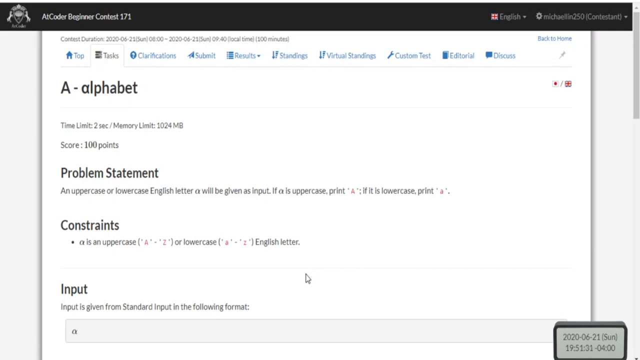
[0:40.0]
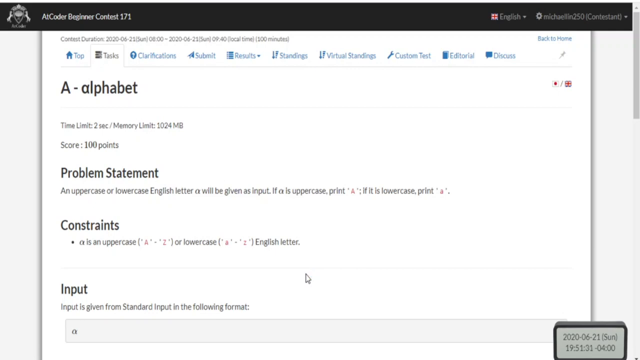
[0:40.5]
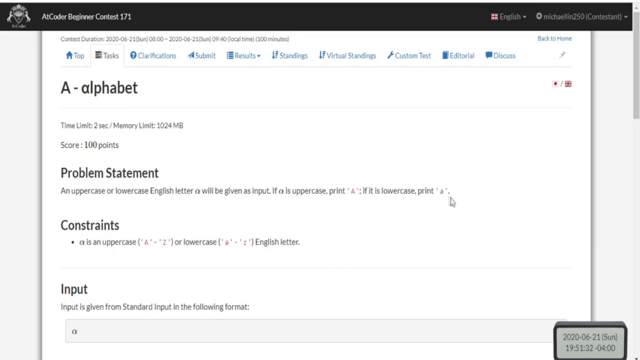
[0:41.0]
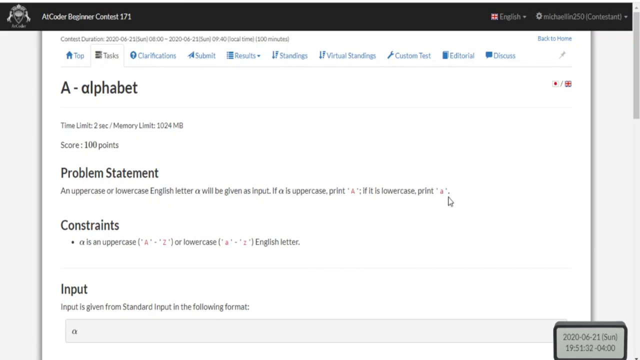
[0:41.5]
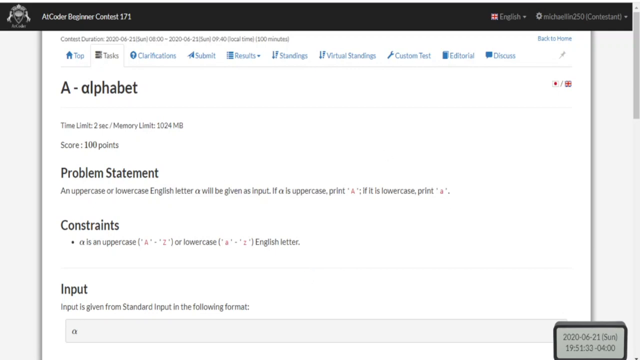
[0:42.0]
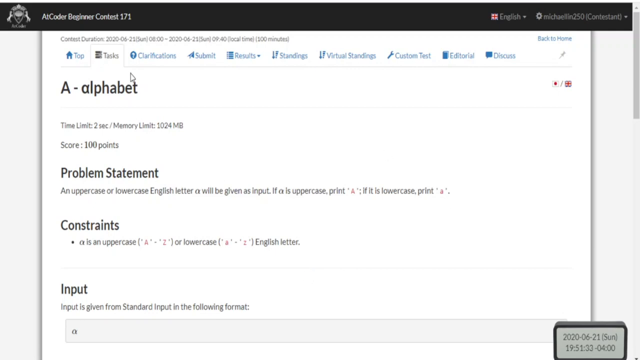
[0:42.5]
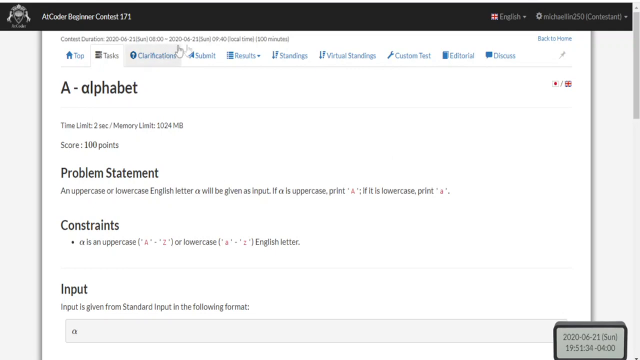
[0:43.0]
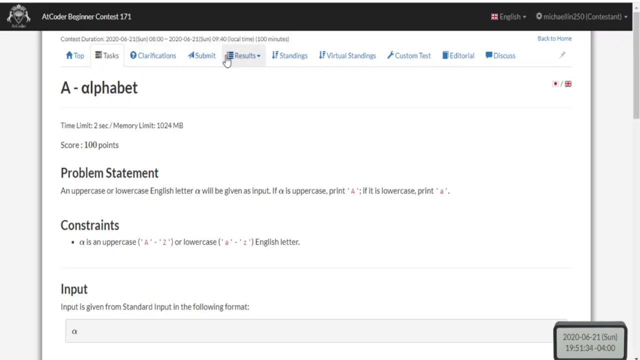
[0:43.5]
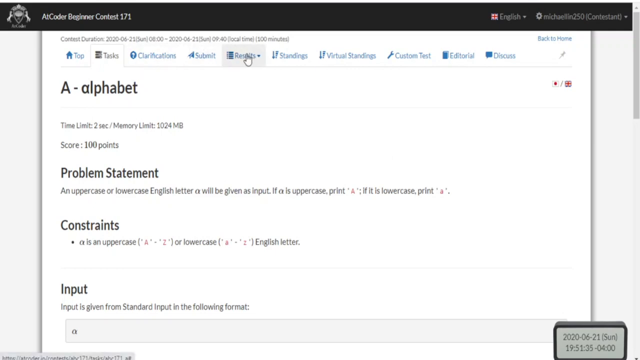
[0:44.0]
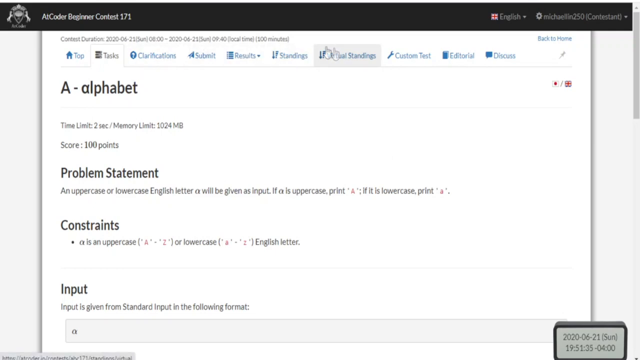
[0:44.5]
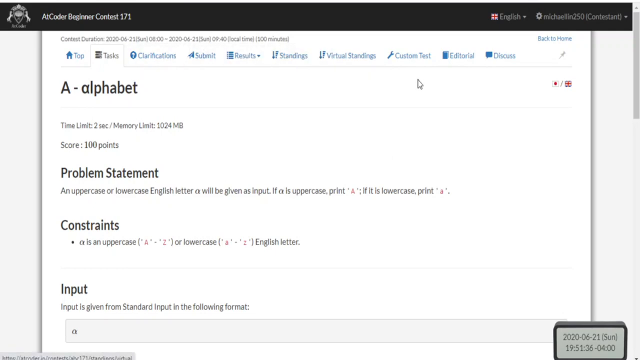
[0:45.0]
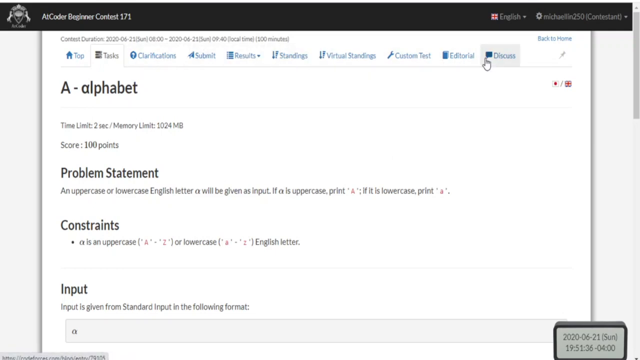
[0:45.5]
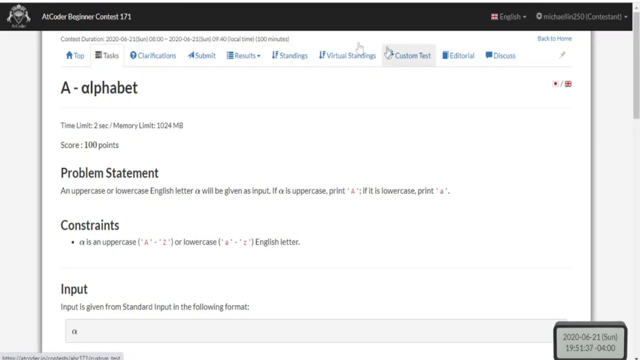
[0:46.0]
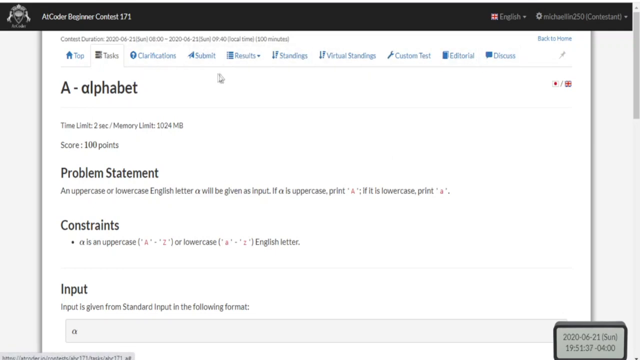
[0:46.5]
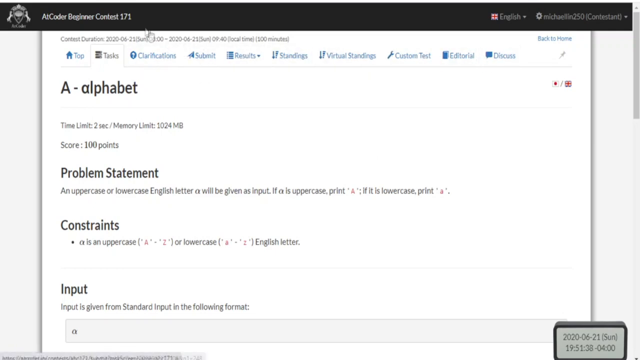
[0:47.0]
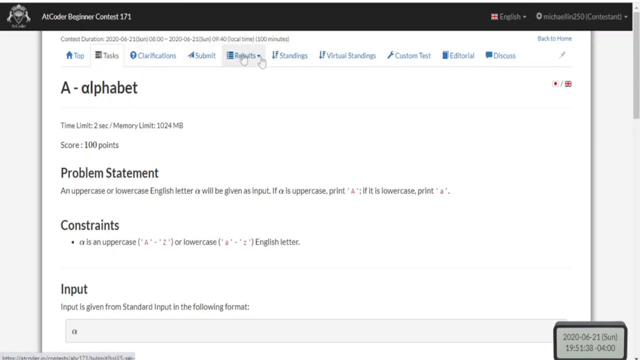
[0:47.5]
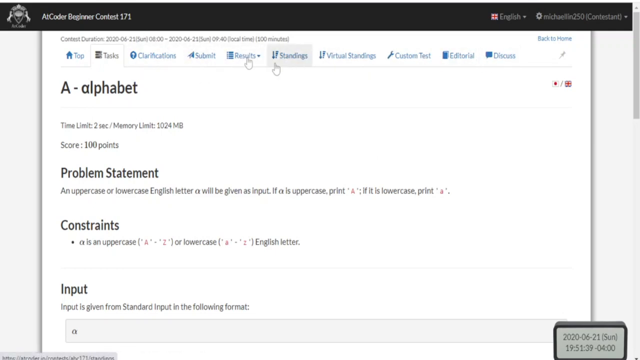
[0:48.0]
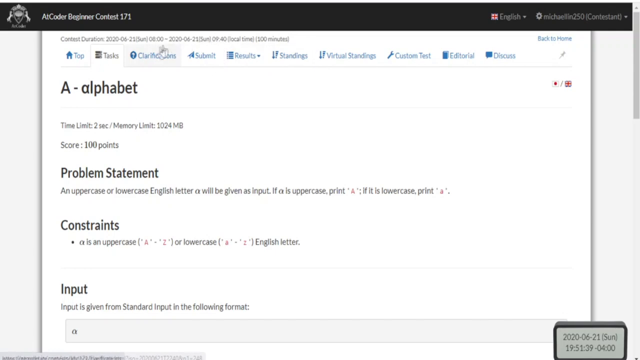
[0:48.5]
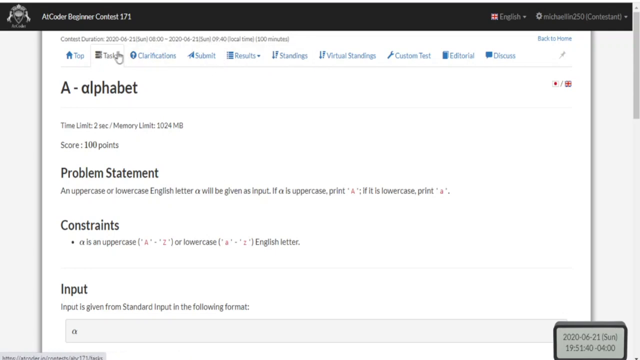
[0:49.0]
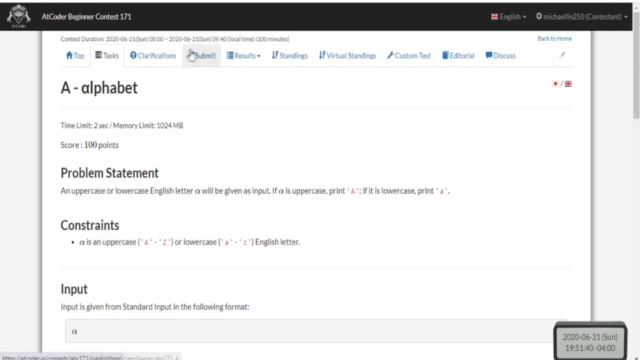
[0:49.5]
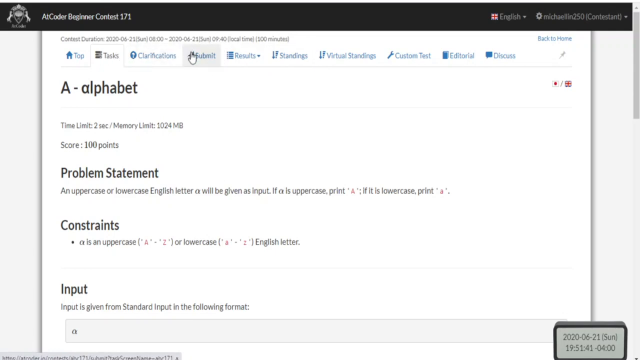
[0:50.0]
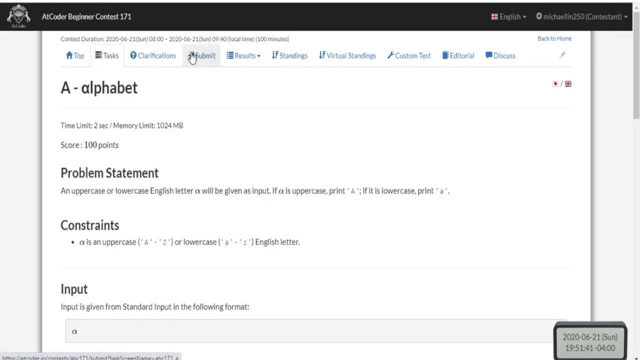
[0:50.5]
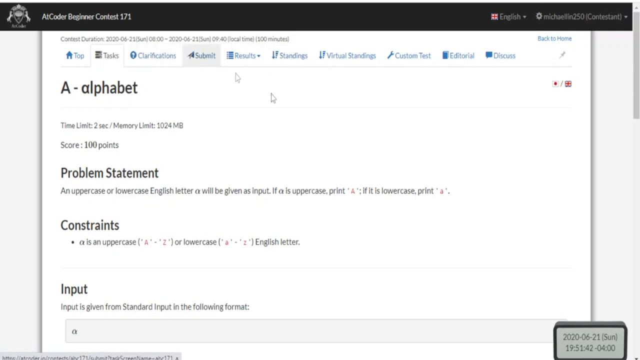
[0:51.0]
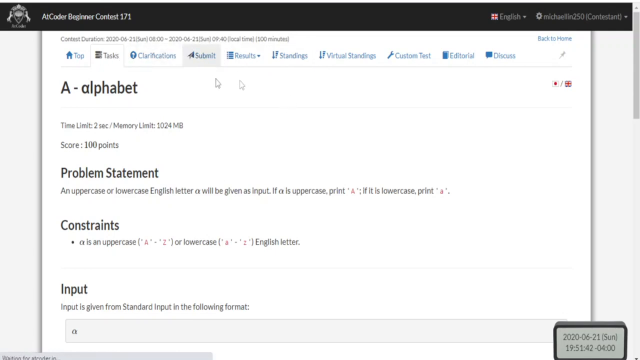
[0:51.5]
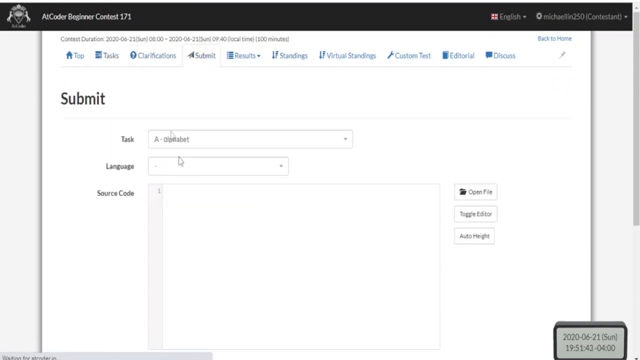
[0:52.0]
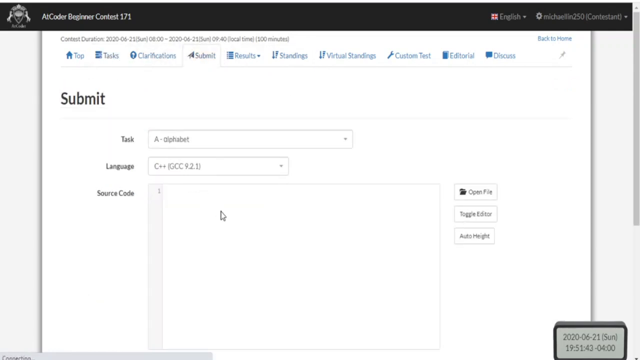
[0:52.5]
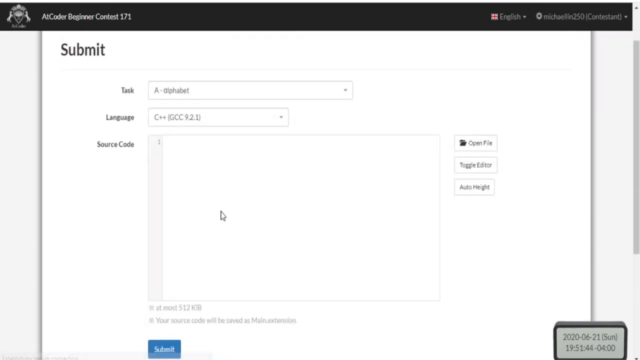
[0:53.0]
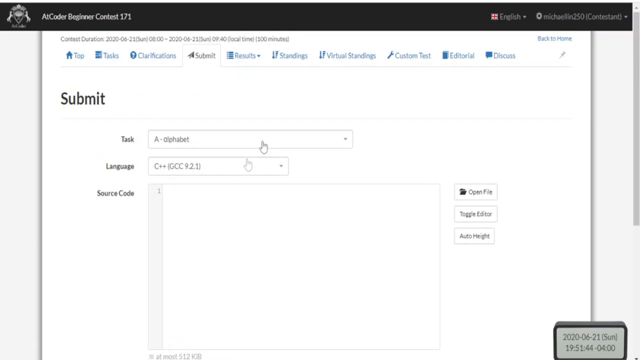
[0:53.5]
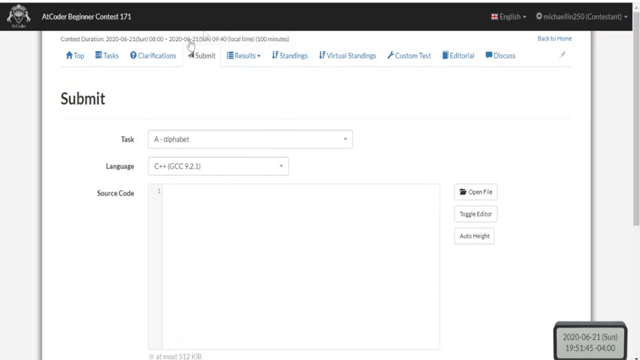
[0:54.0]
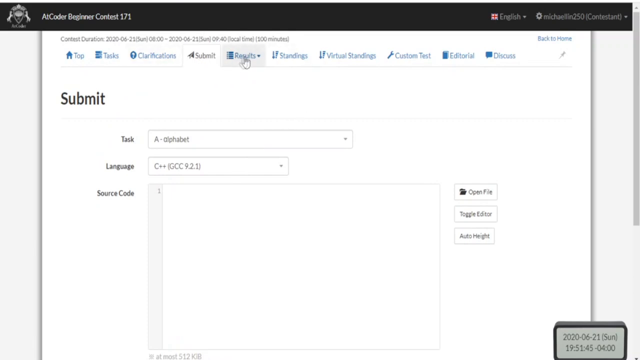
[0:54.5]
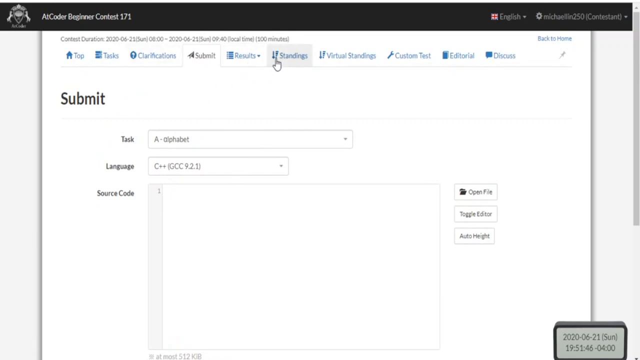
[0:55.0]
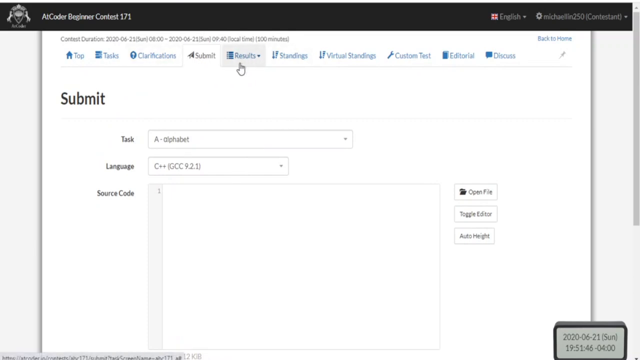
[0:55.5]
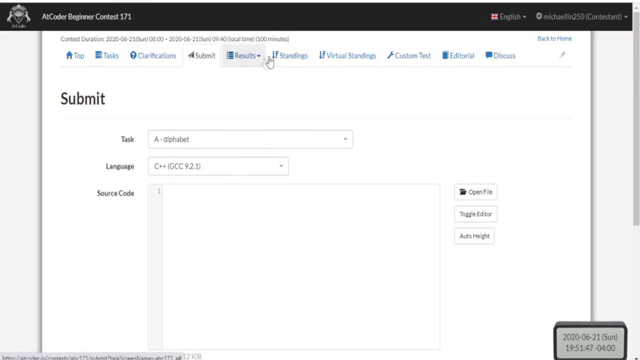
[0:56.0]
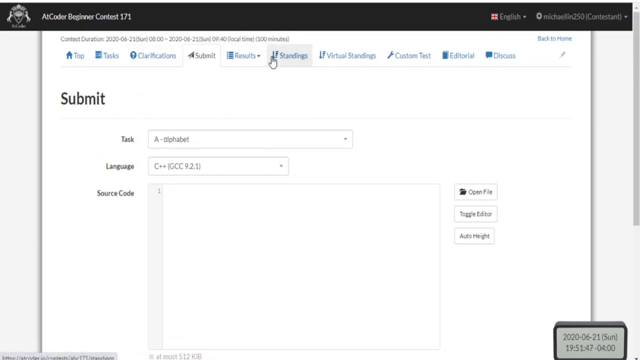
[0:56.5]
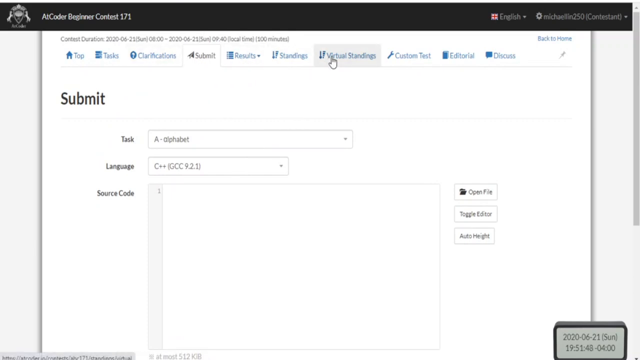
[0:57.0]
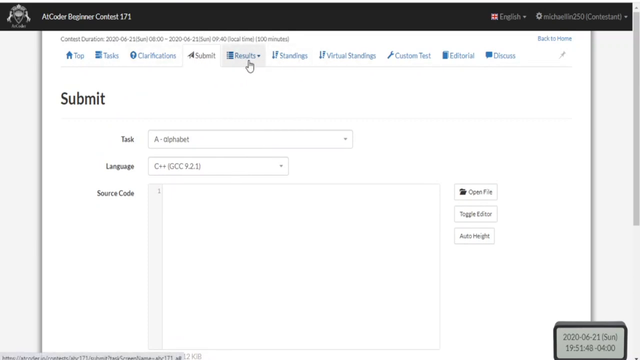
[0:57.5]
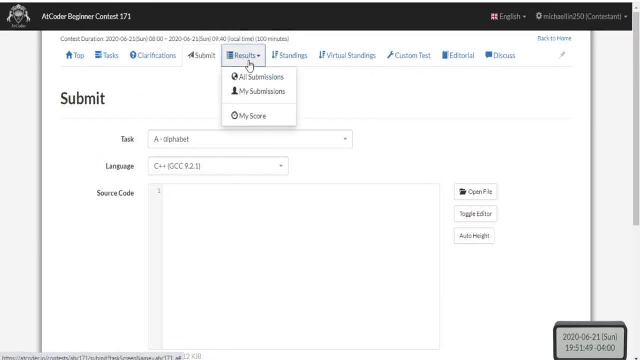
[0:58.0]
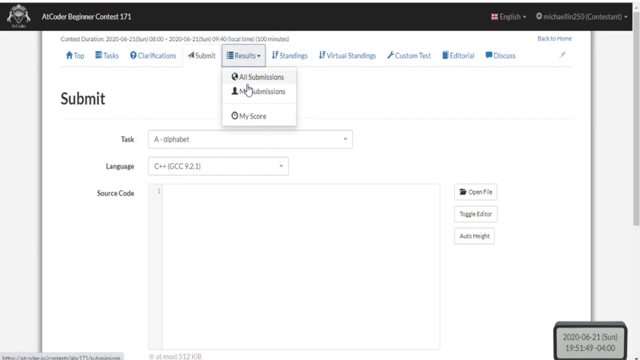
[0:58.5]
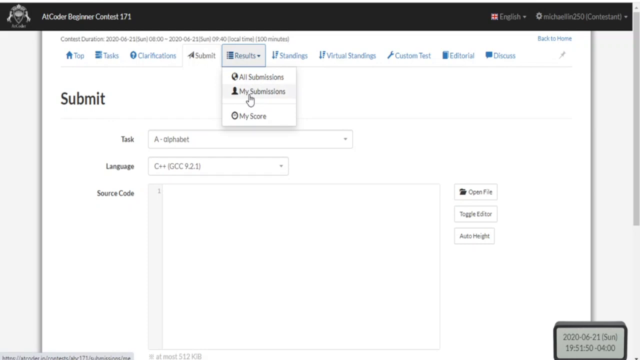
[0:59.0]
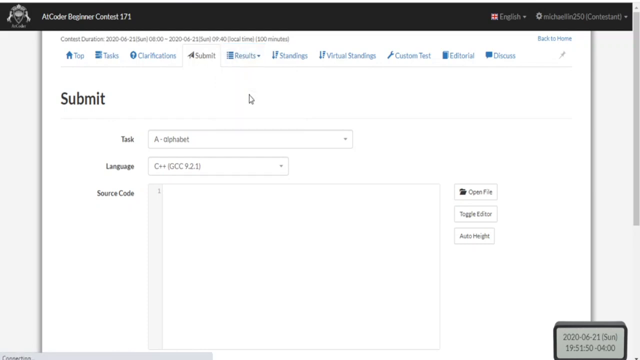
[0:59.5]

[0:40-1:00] Someone's computer screen is shown in a video a little wider than it is tall. A black banner runs left to right across the very top and reads "AI Coder Beginner Contest 171." On the right are two drop-downs: the first with English selected, the second showing their login. Below are roughly 10 tabs across the top, then the main area in black text: "A alphabet, time limit two seconds, memory limit 1024 megabytes, score 100 points. Problem statement, an uppercase or lowercase English letter A will be given as input. If A is uppercase, print A. If it is lowercase, print A. Constraints, A is an uppercase, A through Z or lowercase, A through Z, English letter."